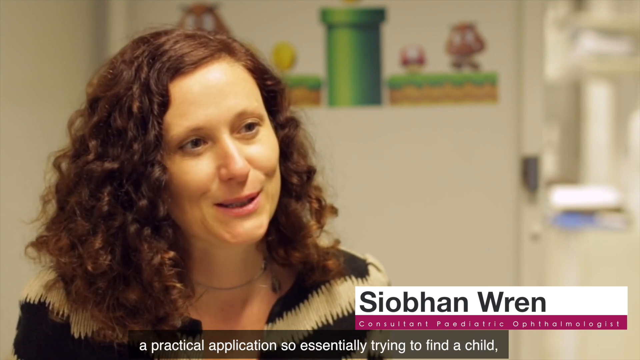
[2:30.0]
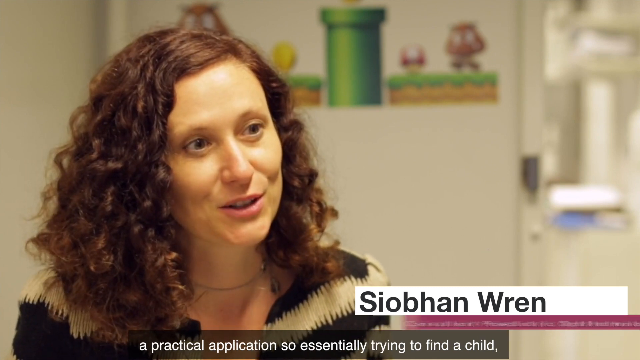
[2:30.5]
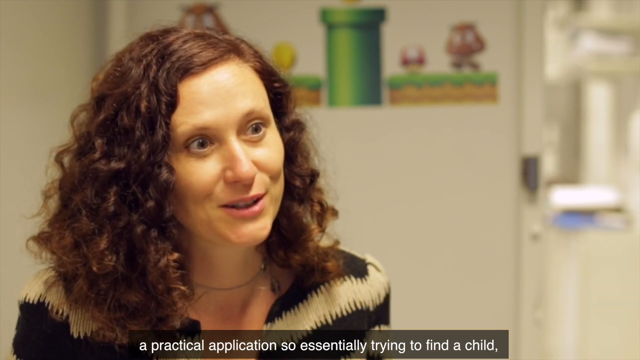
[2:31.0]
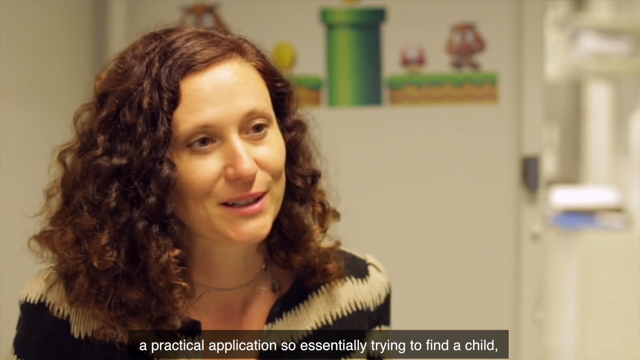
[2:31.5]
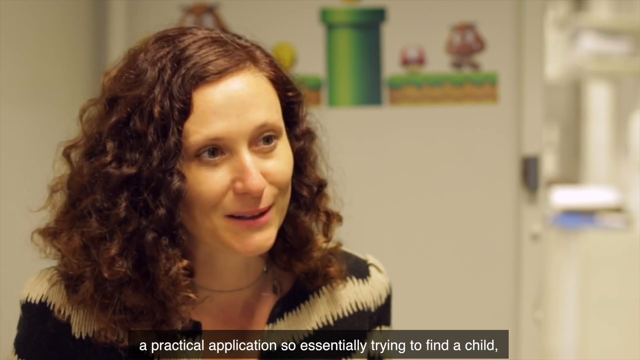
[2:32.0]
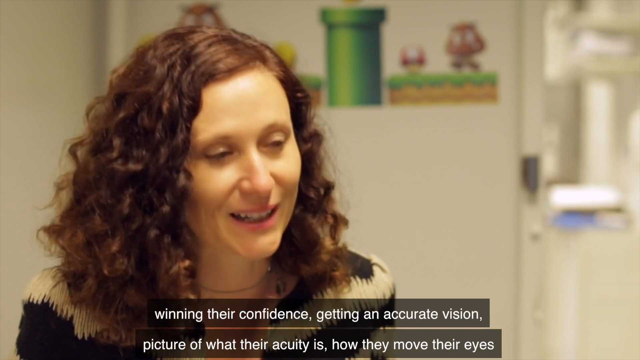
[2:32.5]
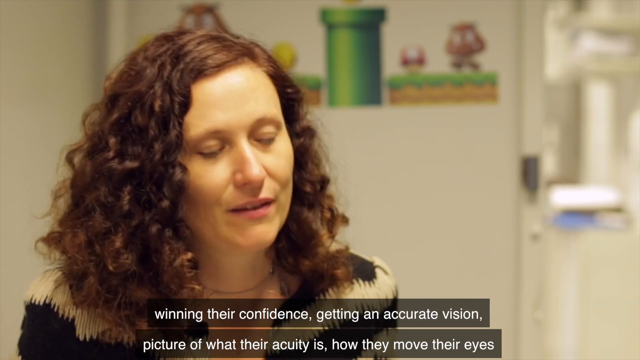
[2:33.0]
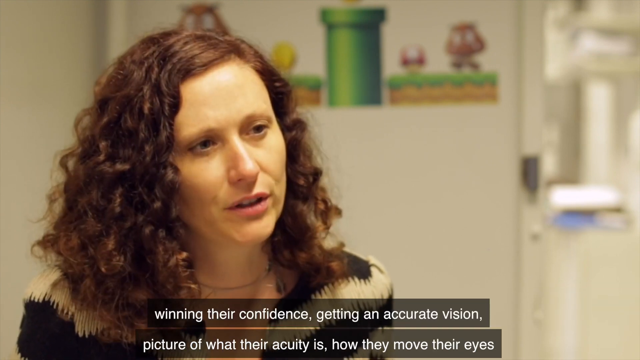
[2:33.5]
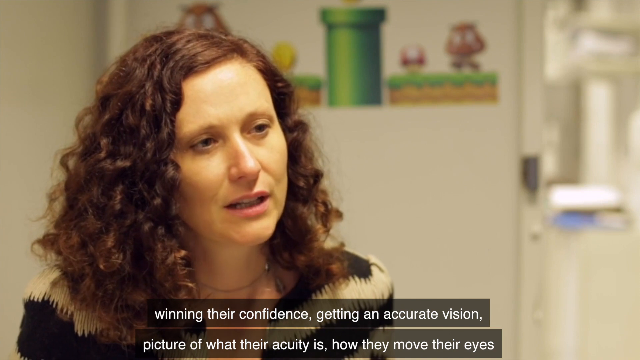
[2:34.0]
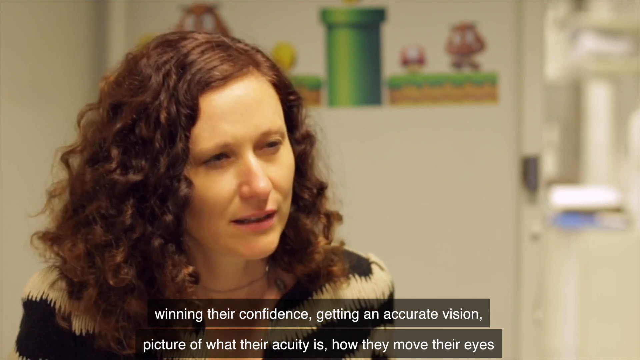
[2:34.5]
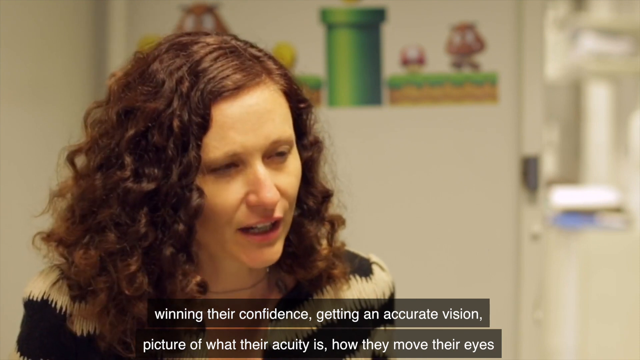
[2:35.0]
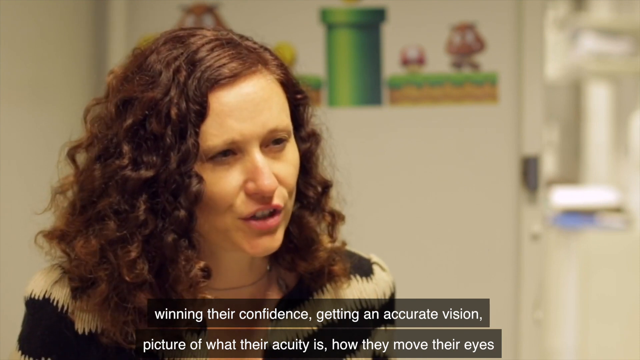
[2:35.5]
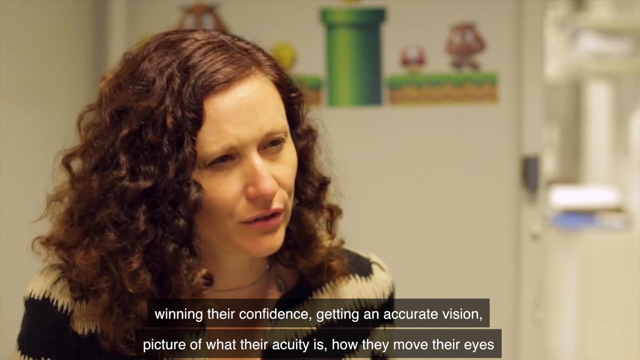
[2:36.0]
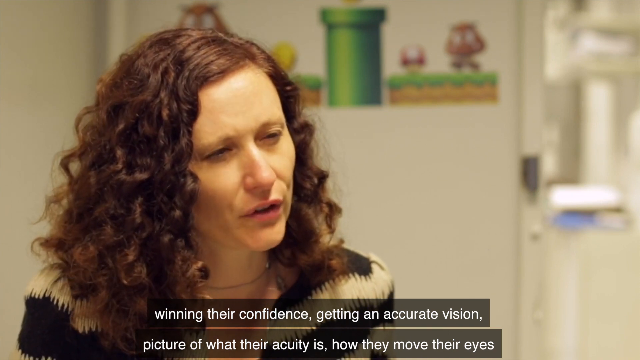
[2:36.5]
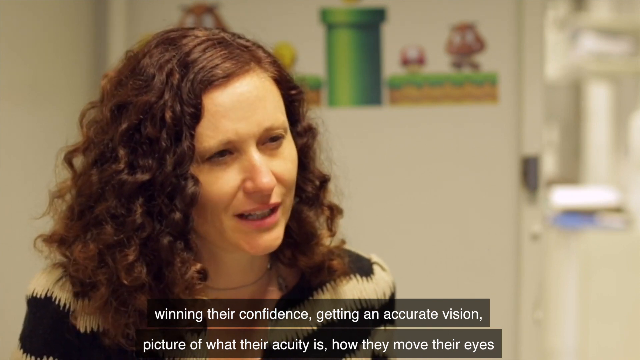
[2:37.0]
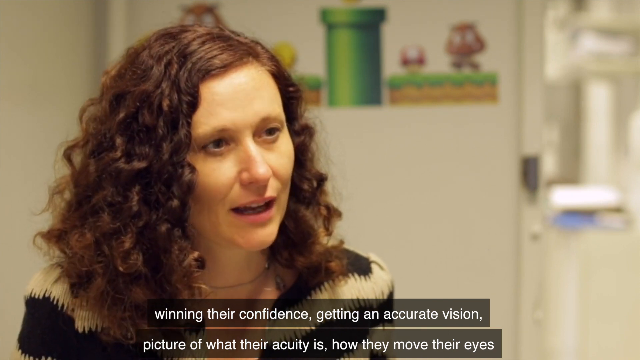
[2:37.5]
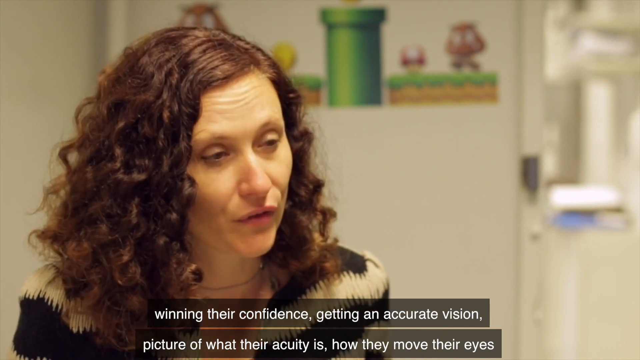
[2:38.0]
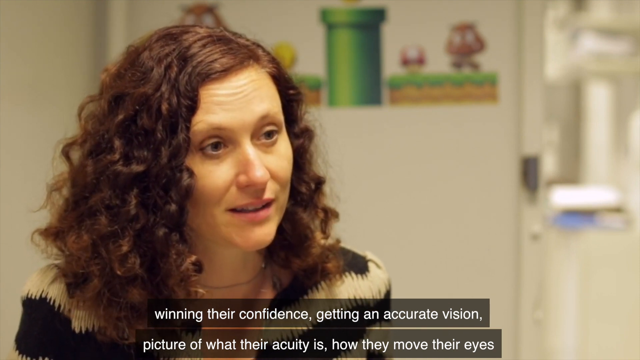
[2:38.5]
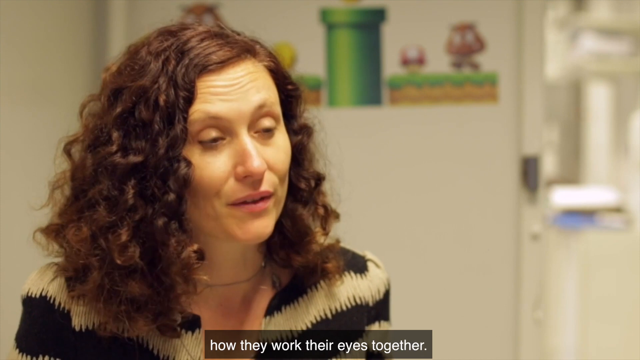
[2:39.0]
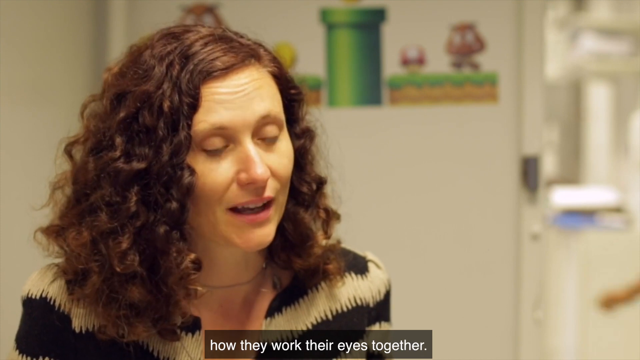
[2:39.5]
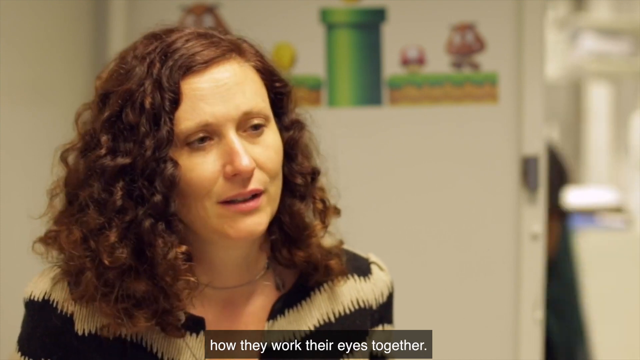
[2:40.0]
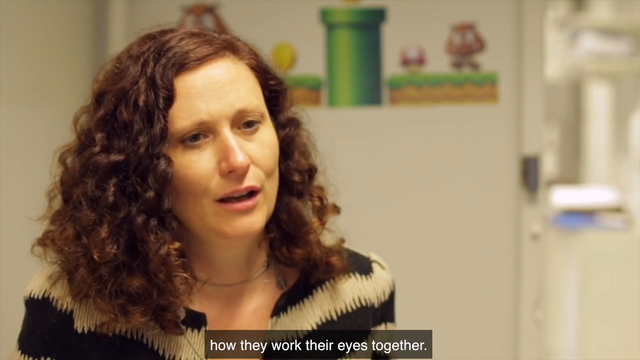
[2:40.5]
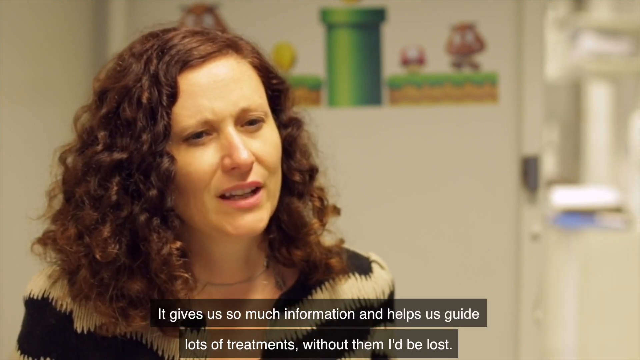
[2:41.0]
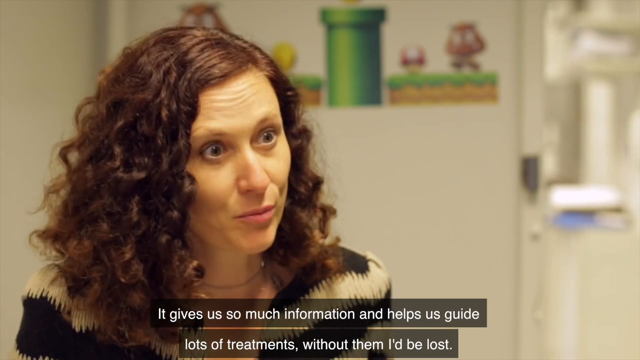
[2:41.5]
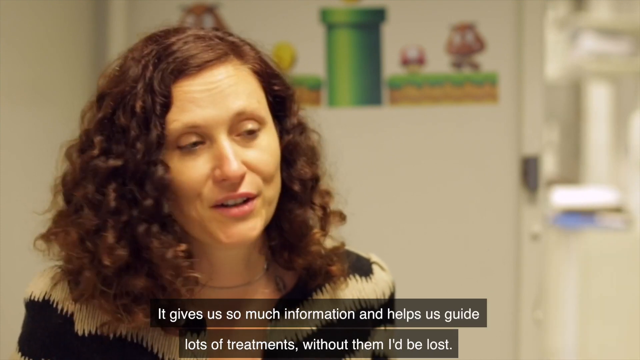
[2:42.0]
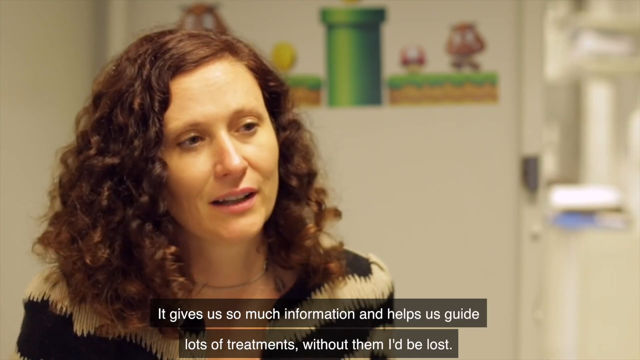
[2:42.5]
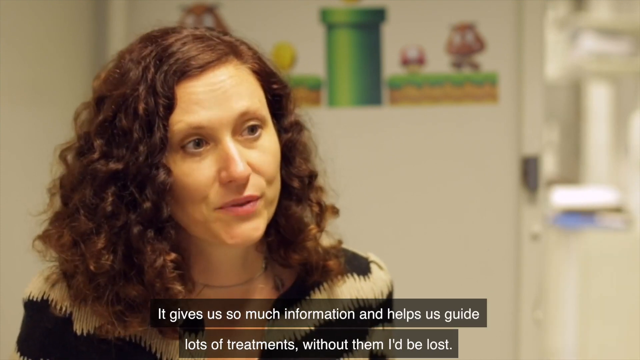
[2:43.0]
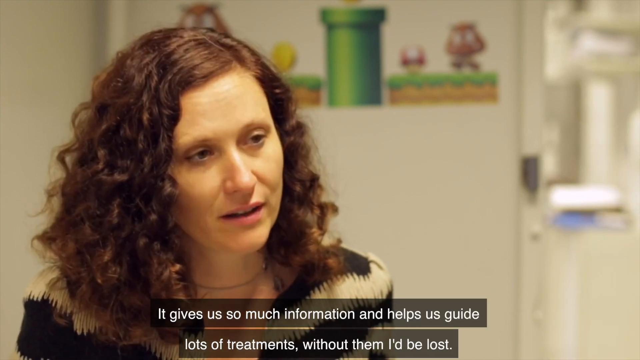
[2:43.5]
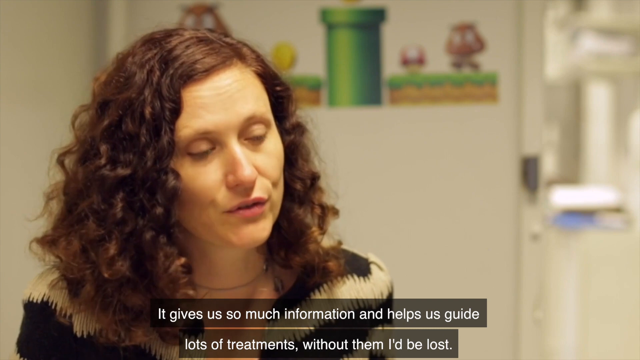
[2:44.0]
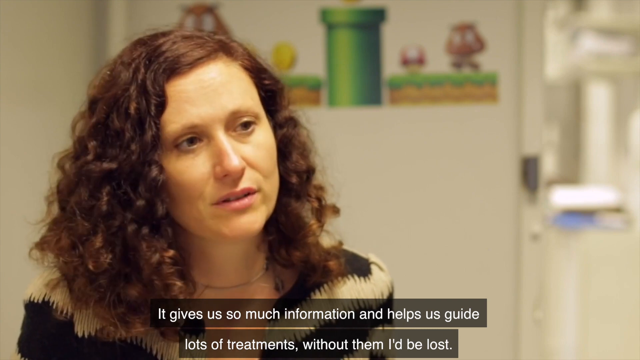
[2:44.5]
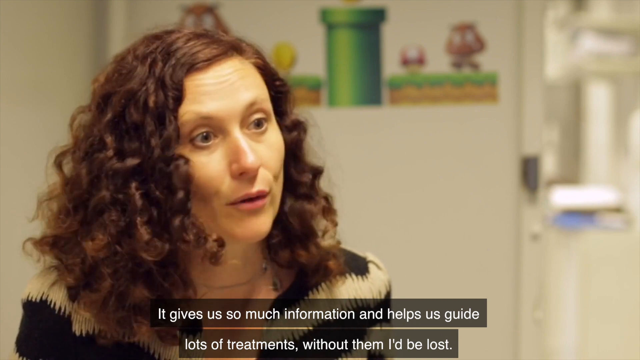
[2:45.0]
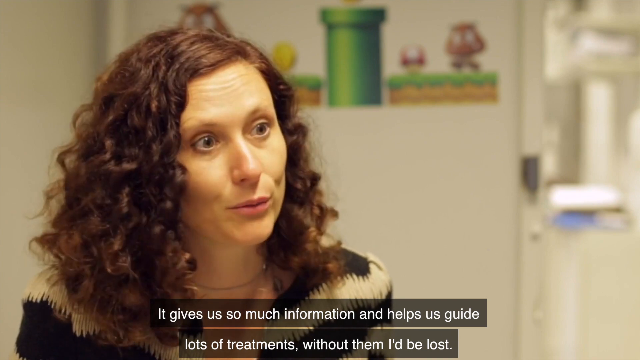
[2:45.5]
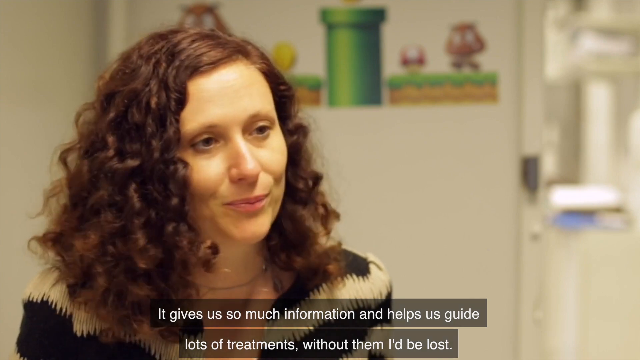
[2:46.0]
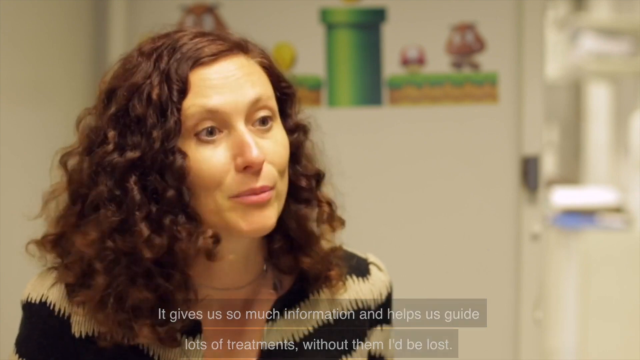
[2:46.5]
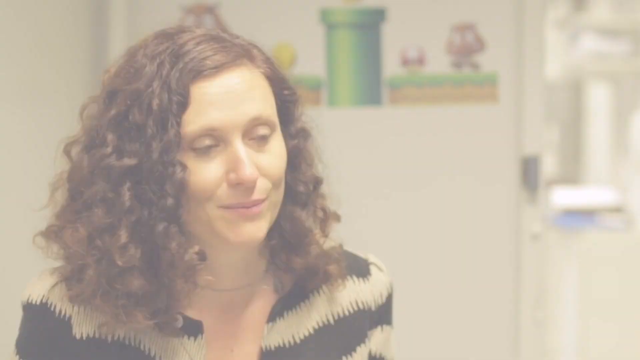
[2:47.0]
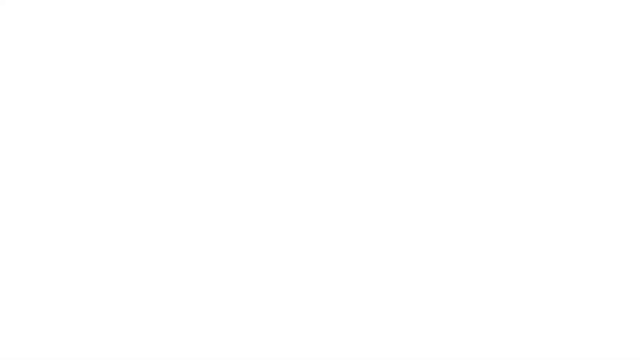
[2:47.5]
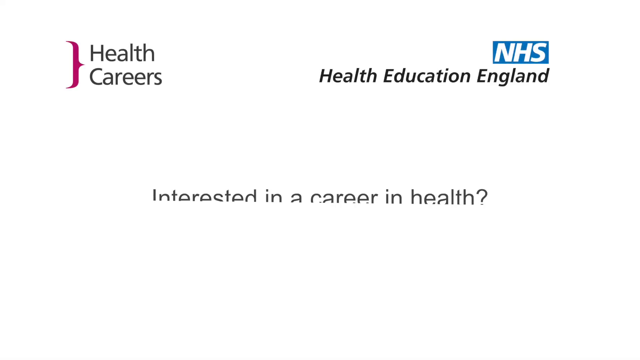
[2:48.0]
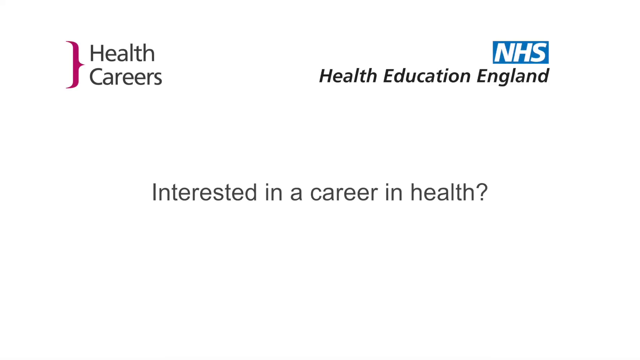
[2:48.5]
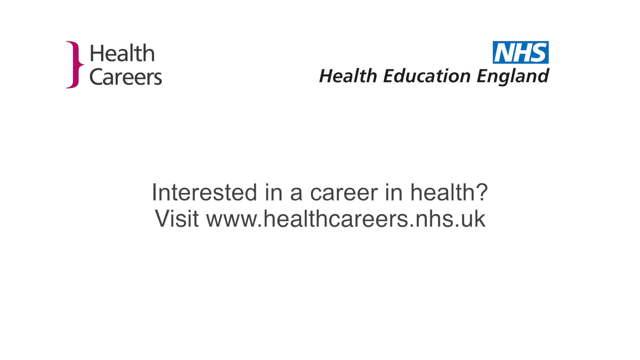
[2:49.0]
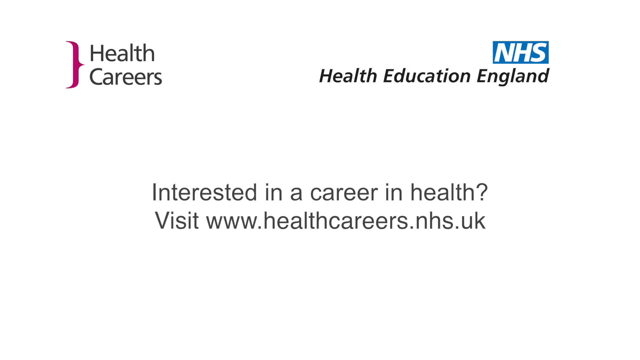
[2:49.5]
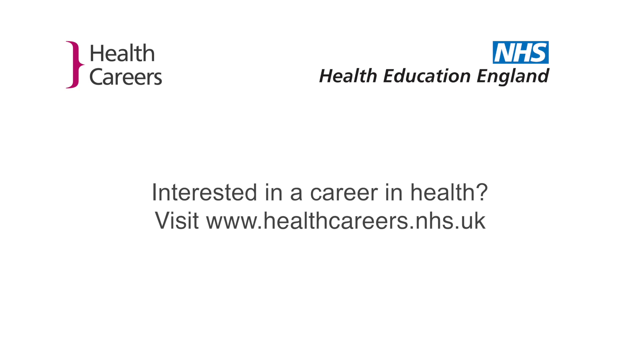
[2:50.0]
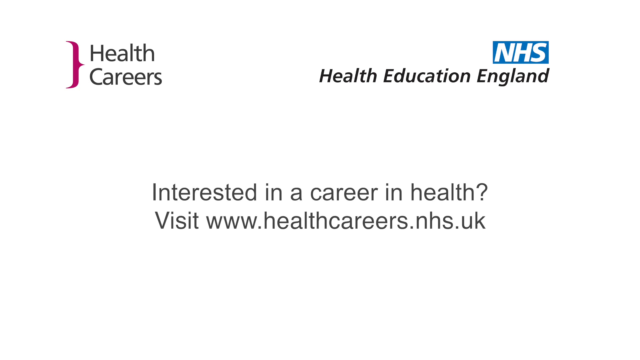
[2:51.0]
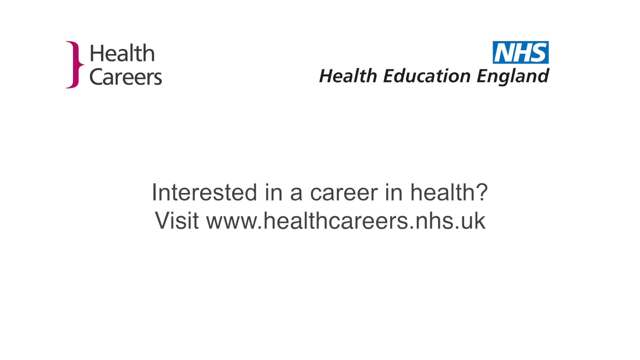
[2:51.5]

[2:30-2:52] A woman, probably in her mid-30s, with long, curly, reddish-brown hair, a very pretty face and dark eyes, speaks to the camera. The video then goes to a white screen. At the top is the red bracket with "health careers" in black print, and on the right side it says "health education England", with a blue rectangle containing "NHS" in white letters just above "England". In the middle of the screen it says "interested in a career in health" and "visit www.healthcareers.nhs.uk".